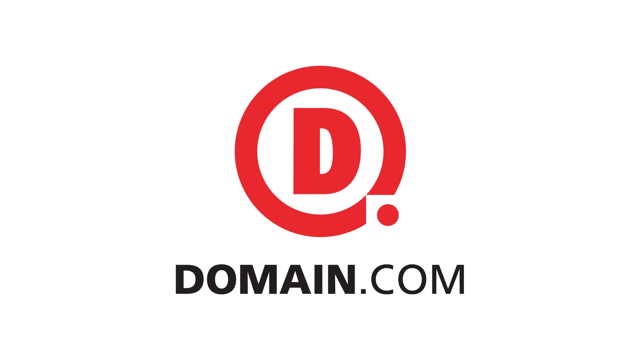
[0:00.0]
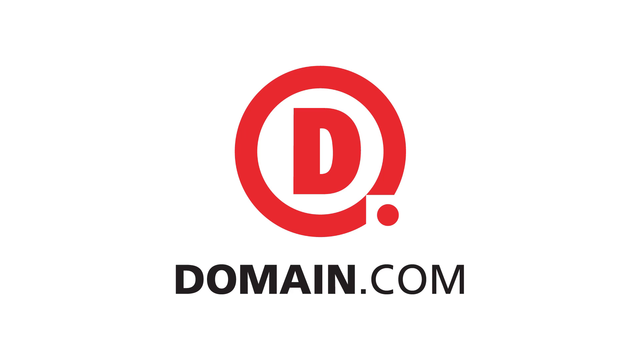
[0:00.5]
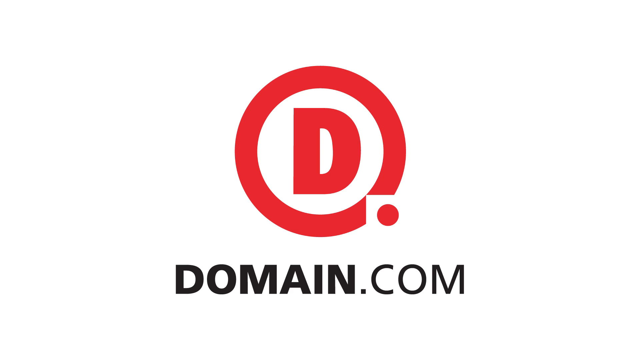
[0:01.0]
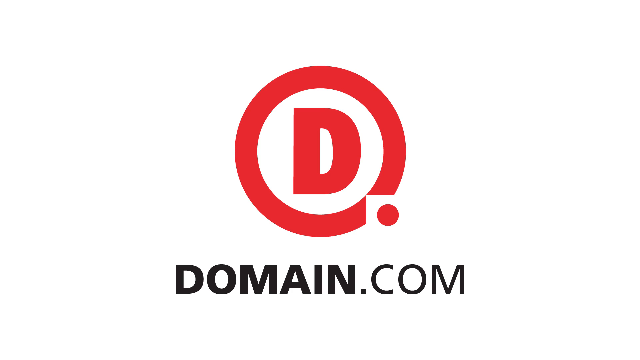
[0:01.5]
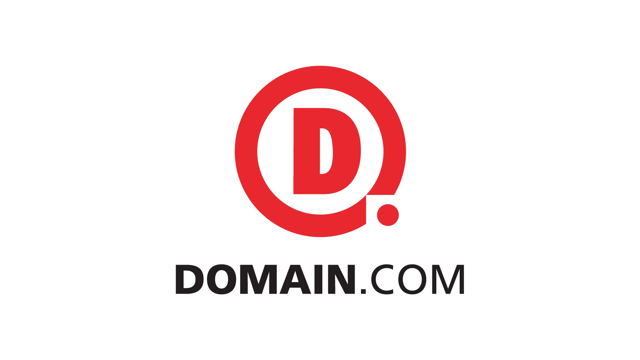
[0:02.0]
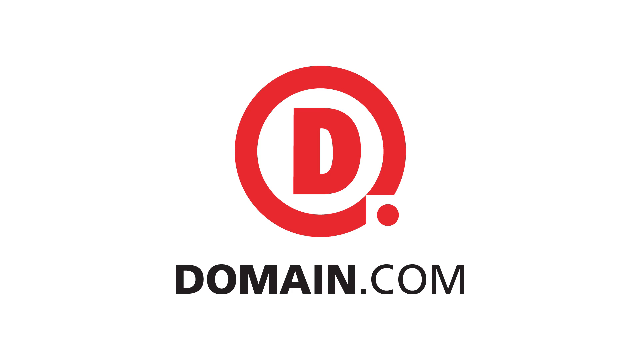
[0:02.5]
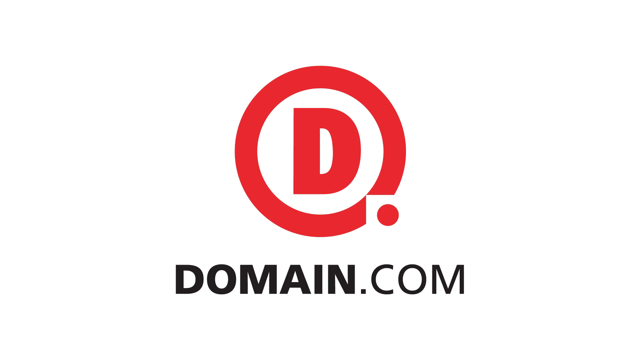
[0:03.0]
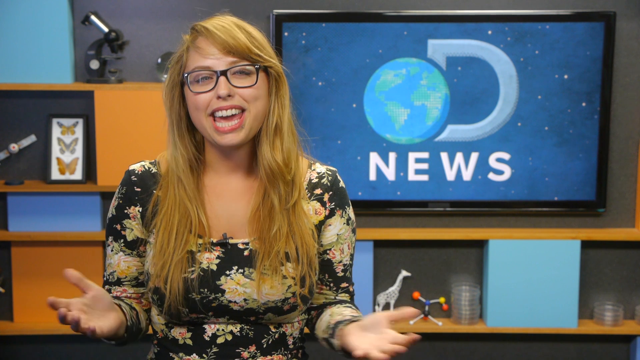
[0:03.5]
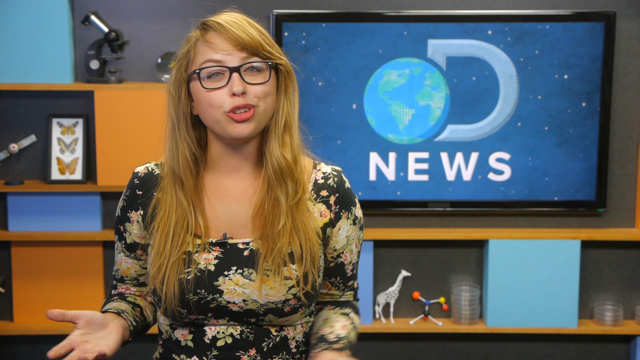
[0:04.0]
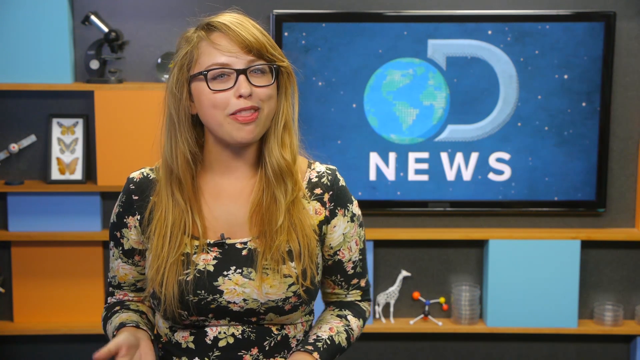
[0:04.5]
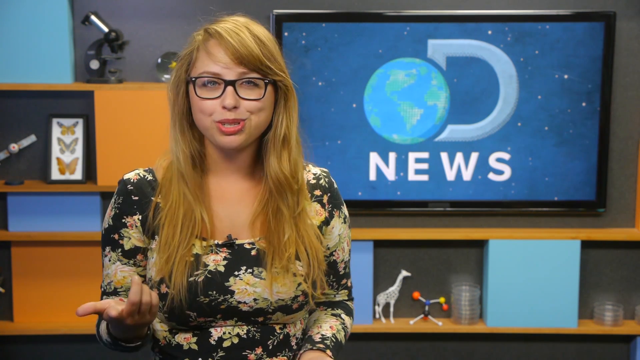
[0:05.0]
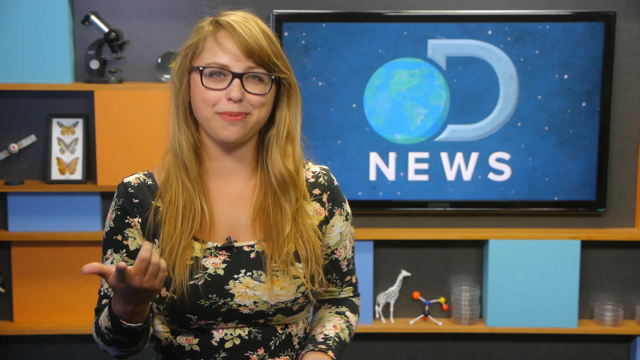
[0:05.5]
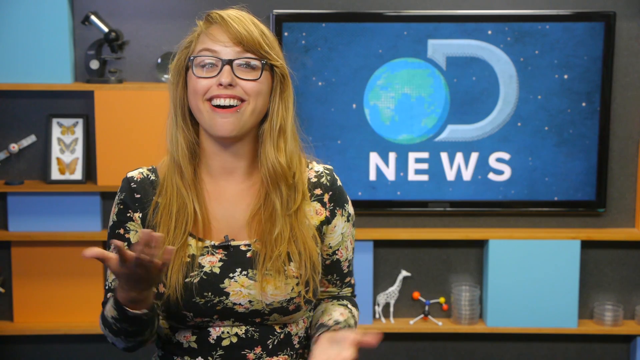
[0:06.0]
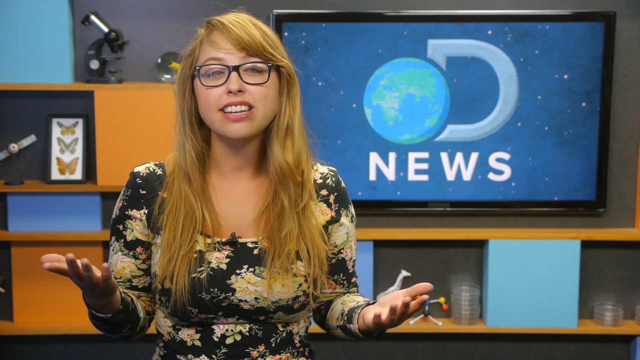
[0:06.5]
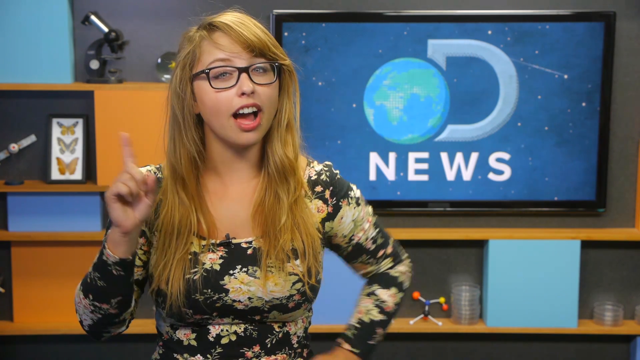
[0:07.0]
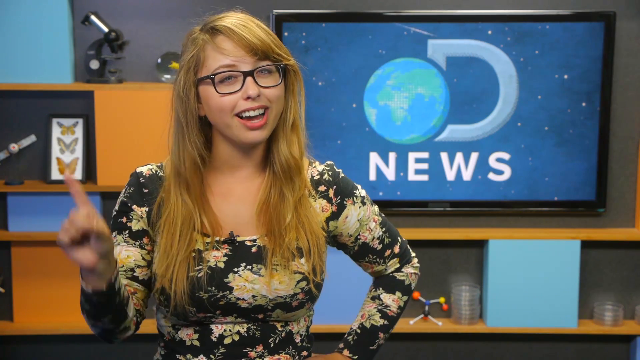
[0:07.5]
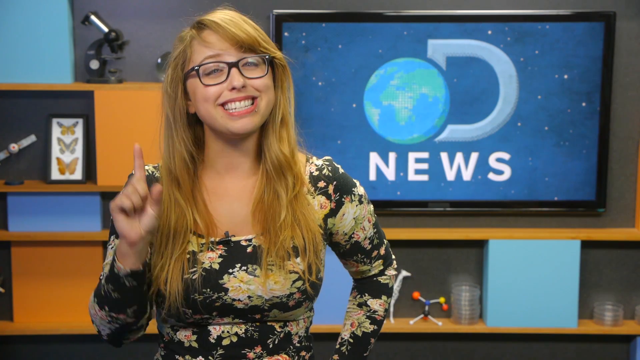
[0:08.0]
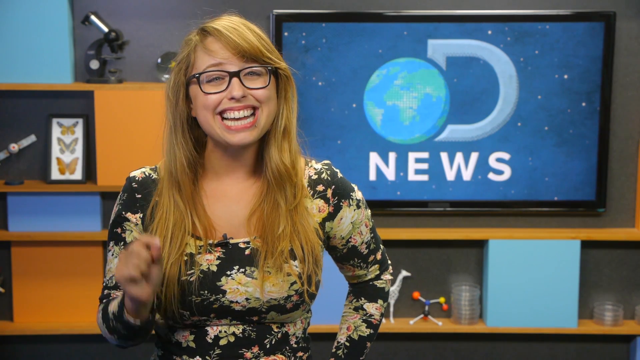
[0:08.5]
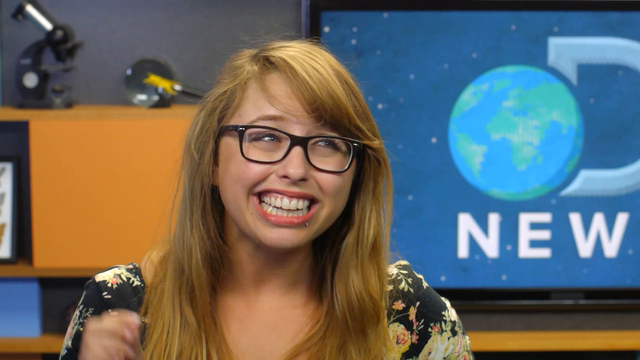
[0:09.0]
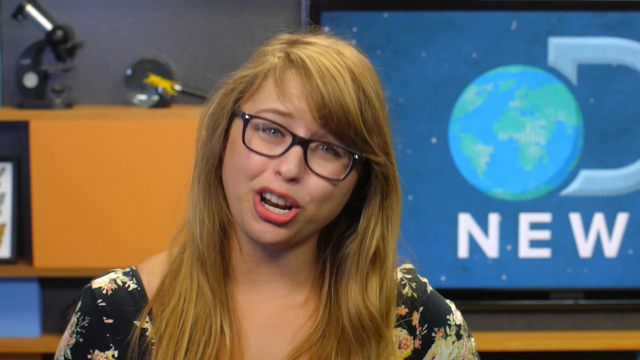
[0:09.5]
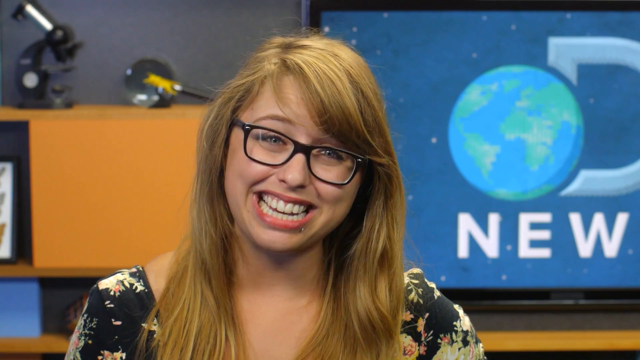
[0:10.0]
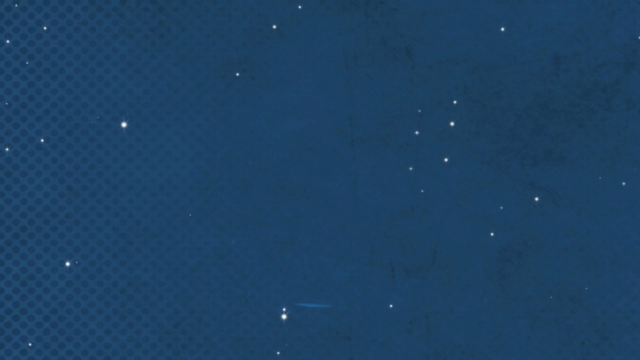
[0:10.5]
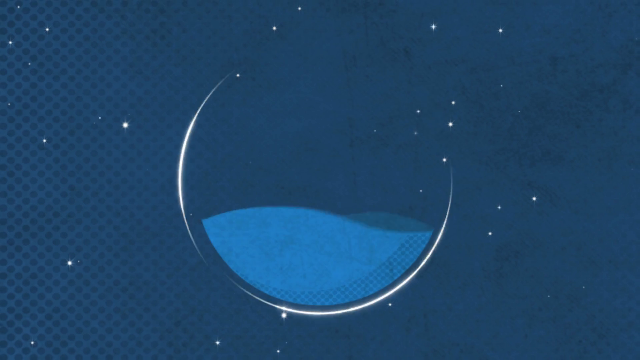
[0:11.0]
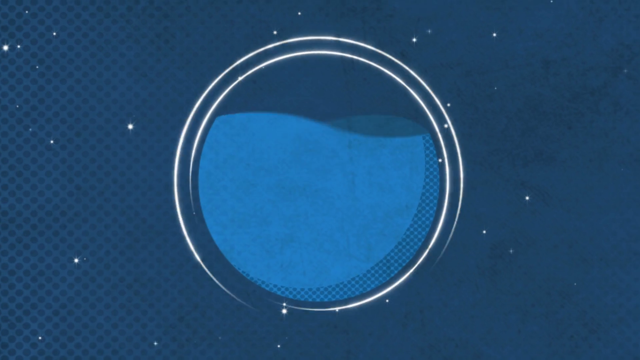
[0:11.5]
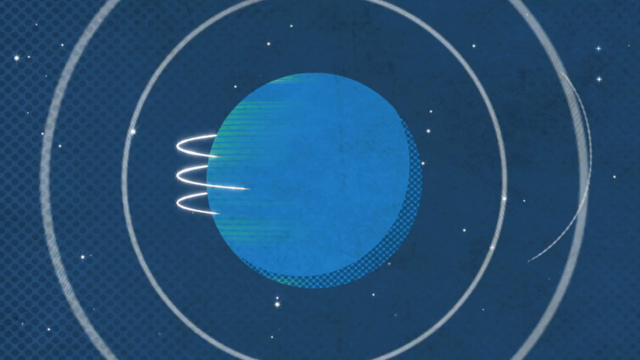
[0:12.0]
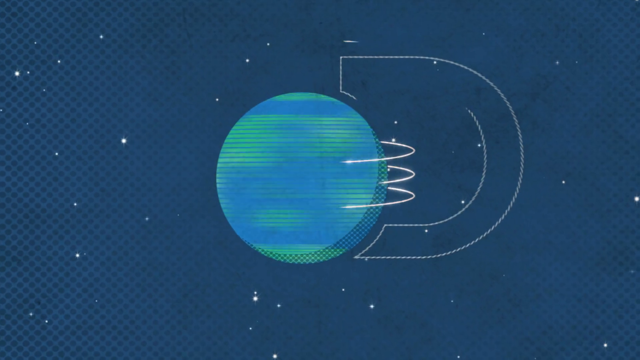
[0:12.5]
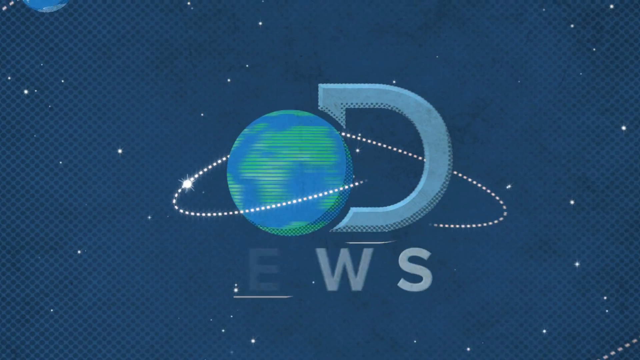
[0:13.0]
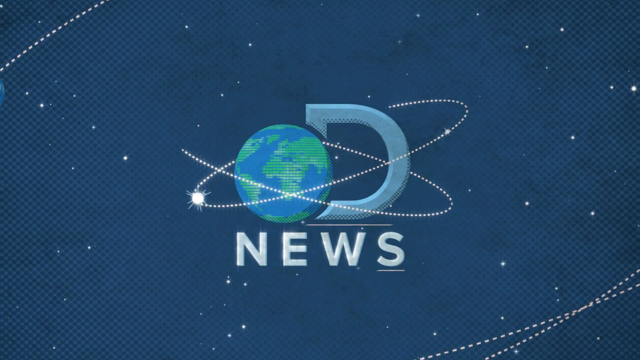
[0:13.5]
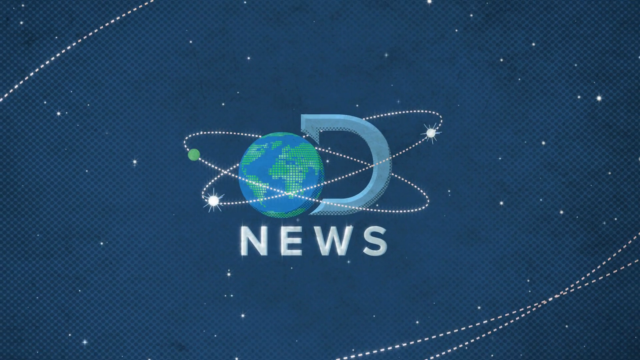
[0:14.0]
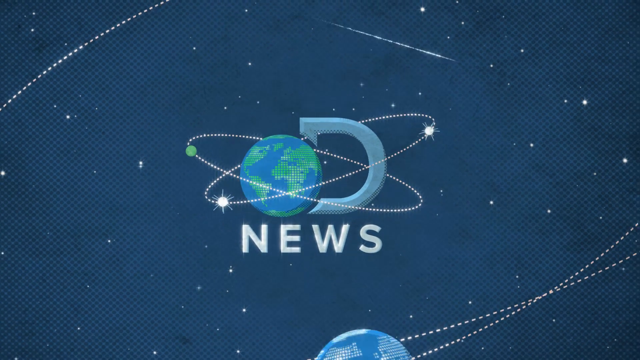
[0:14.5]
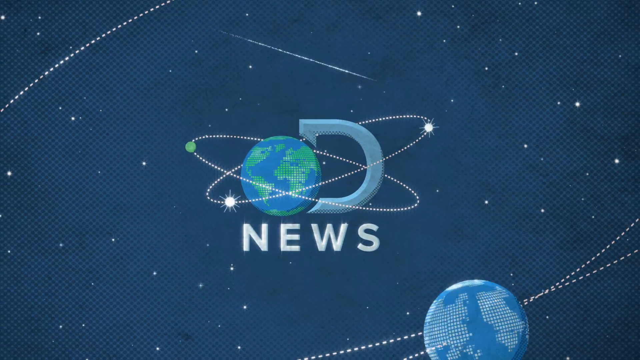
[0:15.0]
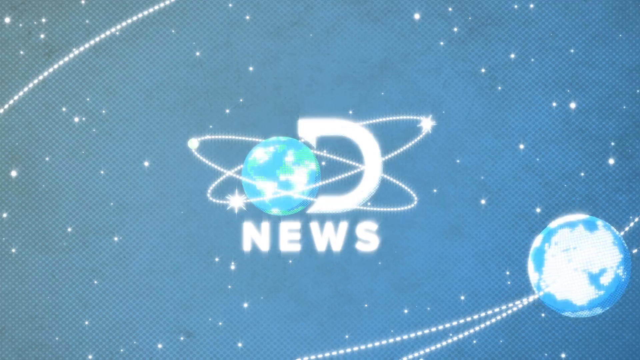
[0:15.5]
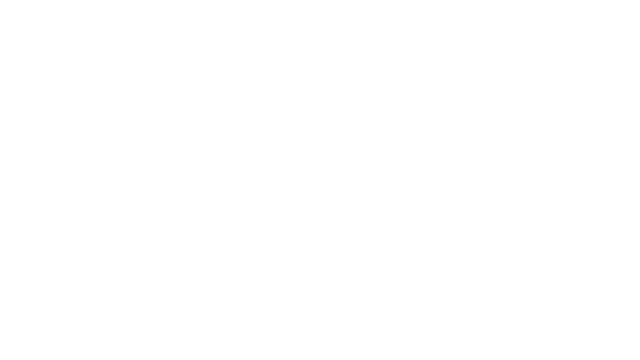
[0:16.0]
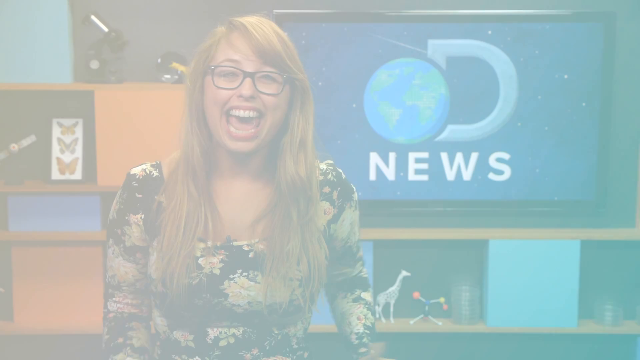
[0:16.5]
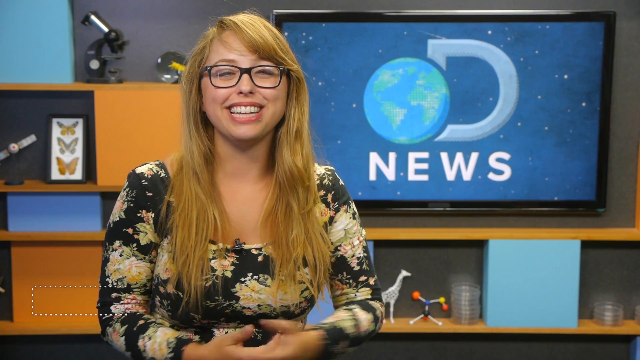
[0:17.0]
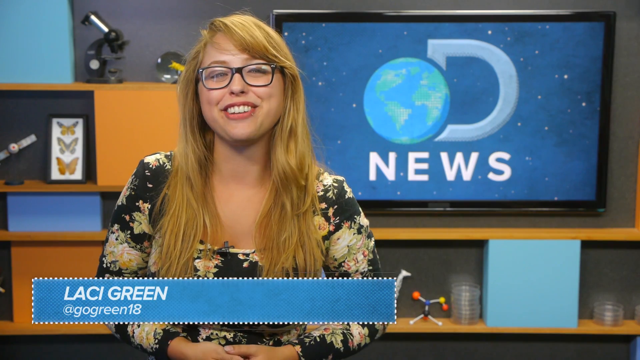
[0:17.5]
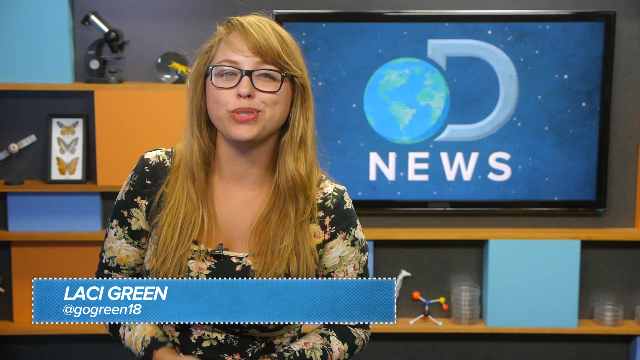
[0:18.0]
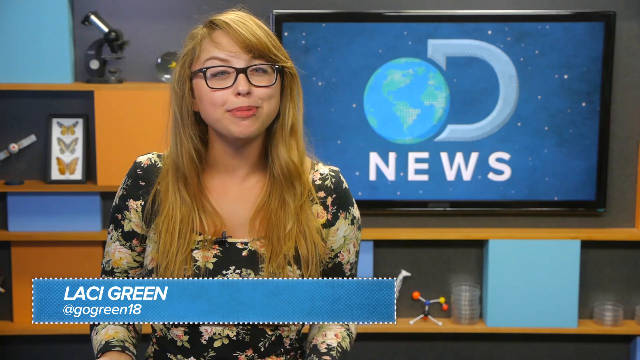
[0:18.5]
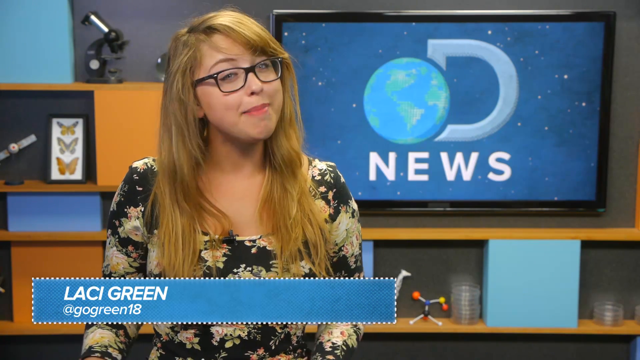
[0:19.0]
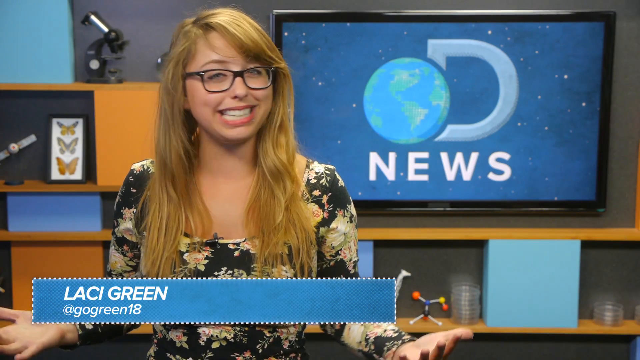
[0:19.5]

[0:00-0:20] A dot-com logo appears, and then the video moves into something like a studio where a woman is sitting. She is young, in her 20s, with long reddish blonde hair and glasses, and she is fairly animated, using hand gestures. It is a news segment, though it seems almost not very serious. In the background are a large television screen, some shelving and some brown wooden cabinets. She wears a black blouse with what looks like flowers and a low dip-neck collar that is not revealing. The name Laci Green is on the front. On the television screen are a large D and a spinning globe, and it says "news".